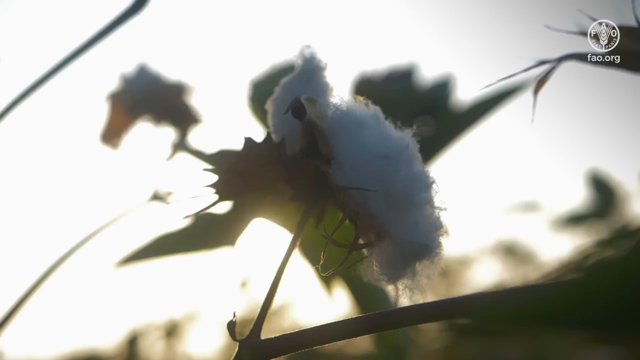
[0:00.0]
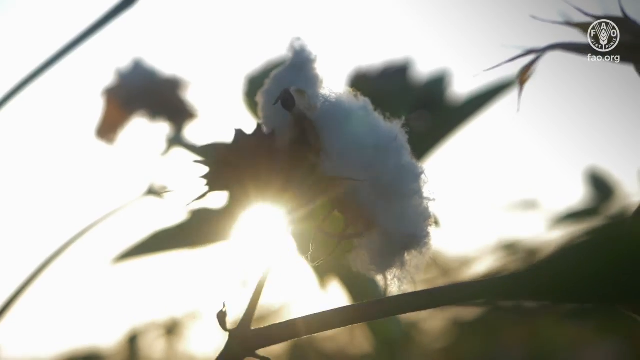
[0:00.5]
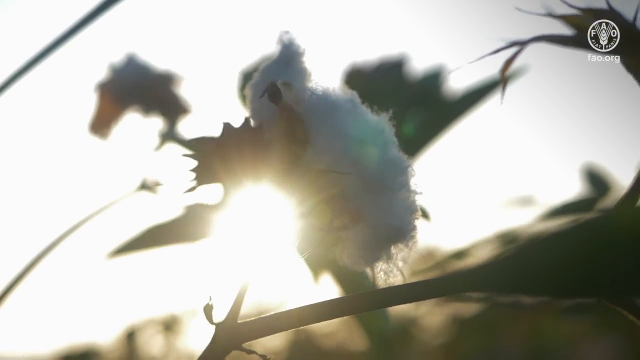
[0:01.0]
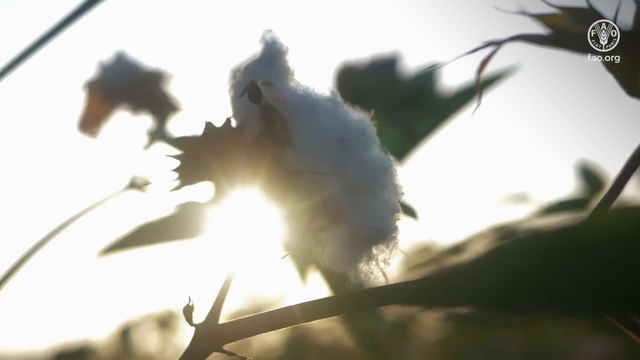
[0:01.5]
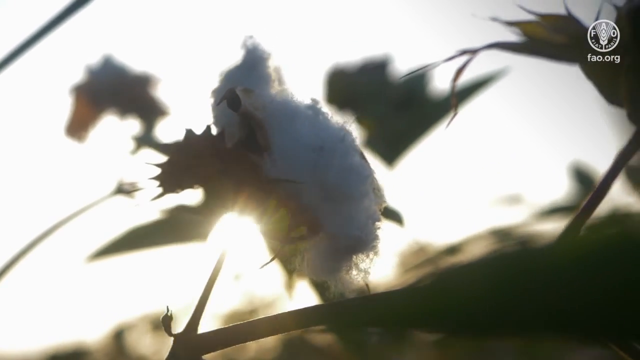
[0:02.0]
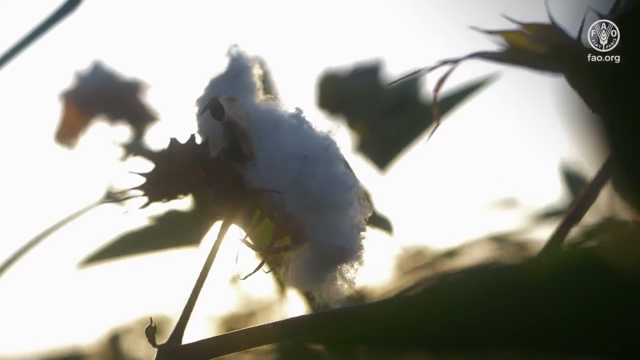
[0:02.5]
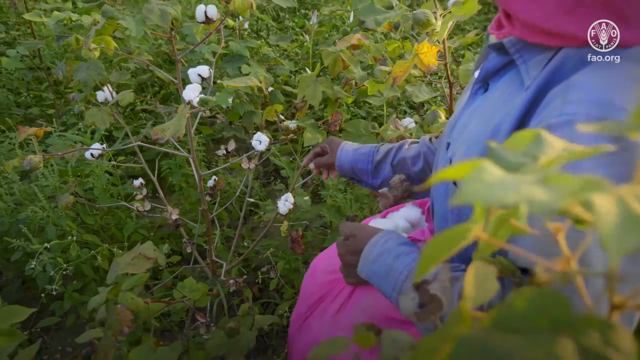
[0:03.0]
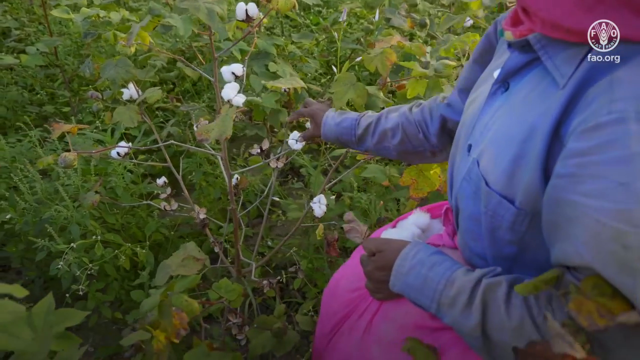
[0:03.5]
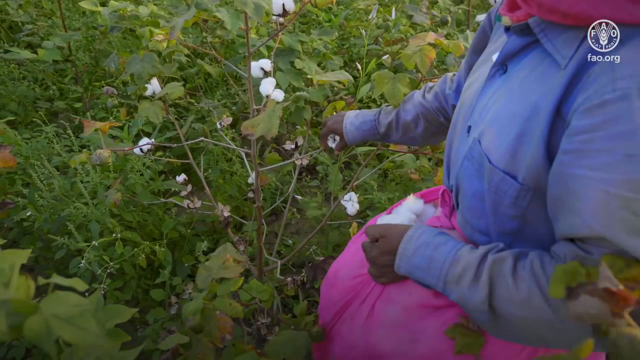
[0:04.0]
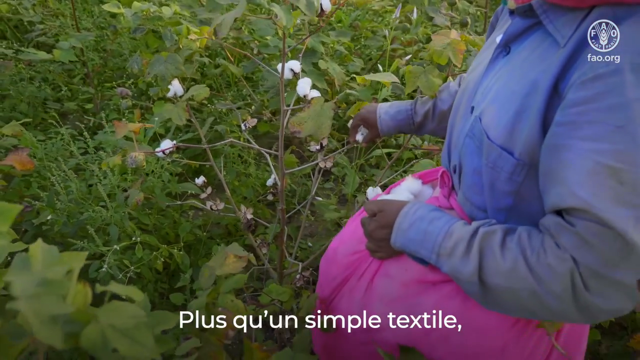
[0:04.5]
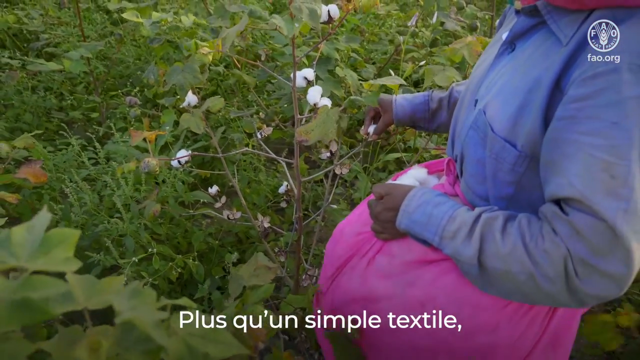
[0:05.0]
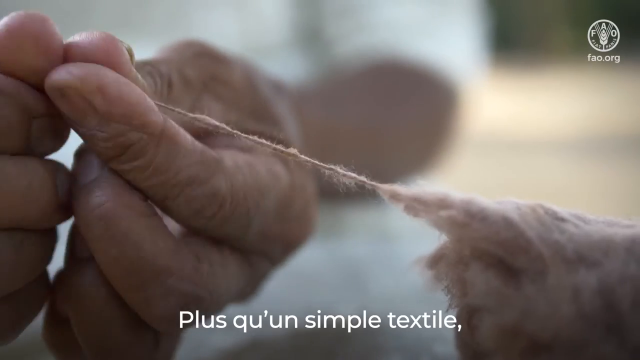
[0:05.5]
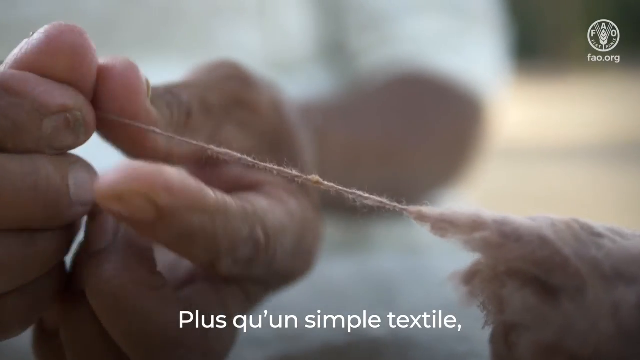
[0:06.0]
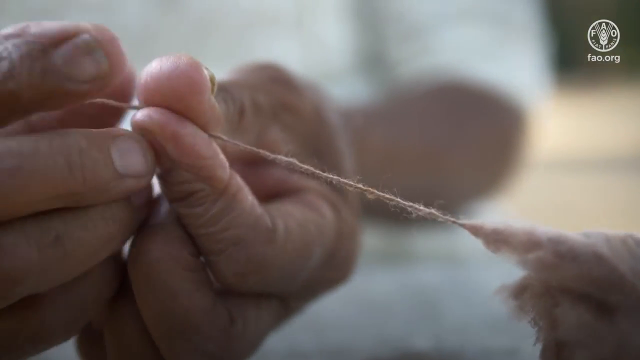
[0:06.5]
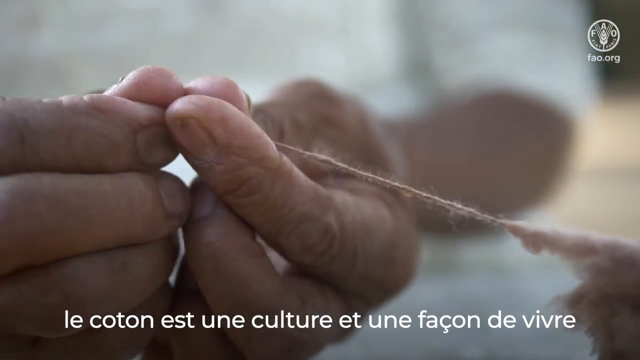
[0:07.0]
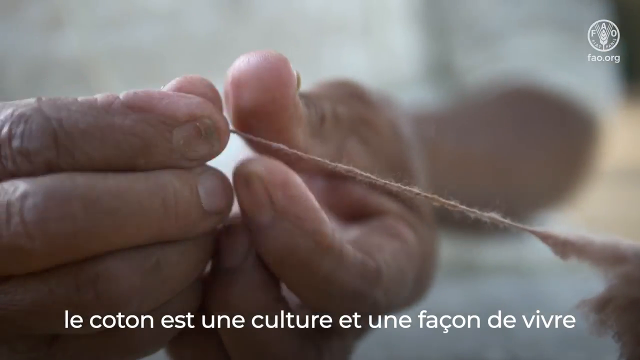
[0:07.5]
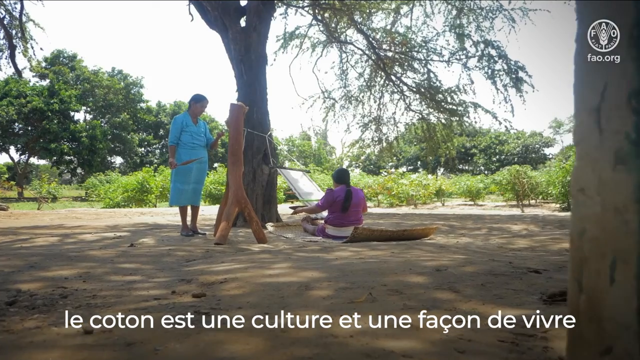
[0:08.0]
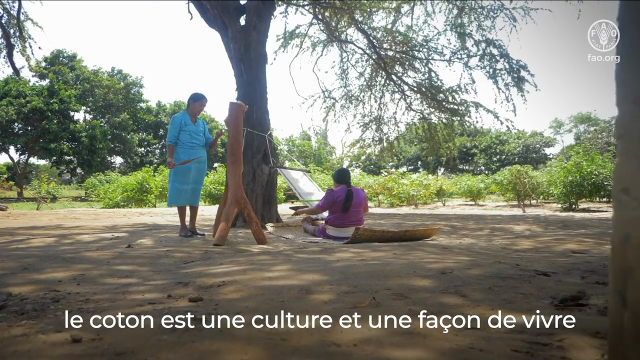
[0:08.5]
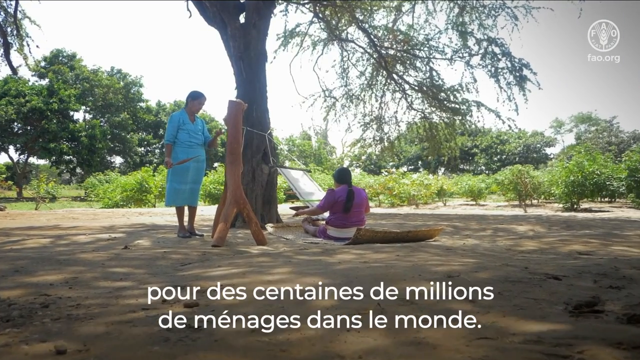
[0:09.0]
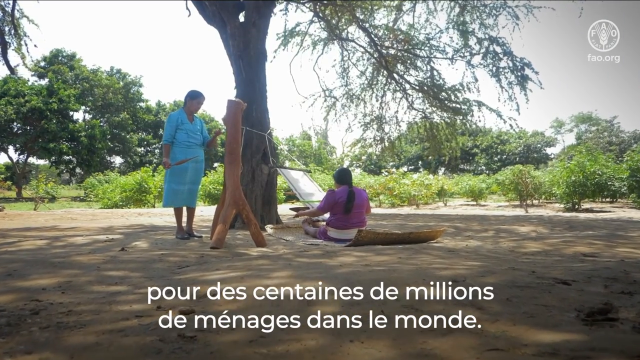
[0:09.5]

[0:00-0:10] The video opens with the sun peeking out behind a tuft of a cotton plant. Several stems with the flowers of the cotton plant are around, while the middle of the screen shows a piece of cotton in full view. The camera pans to a woman holding a pink cloth bag, picking cotton and putting it into the bag. She wears a collared blue long-sleeve t-shirt and seems to have a pink towel wrapped around her neck. There is caption text underneath the video in a different language. Next comes a close-up shot of two hands, likely those of an older person since the hands are quite wrinkled, spinning some of the cotton into a long strand.